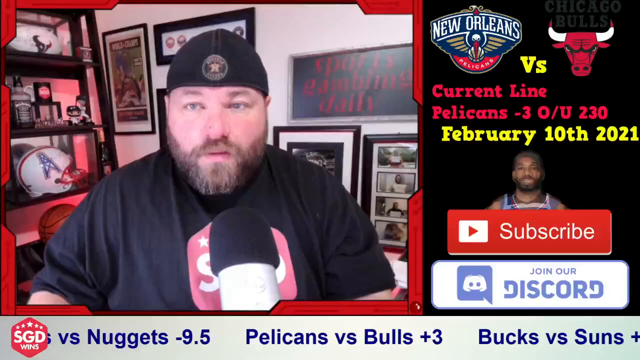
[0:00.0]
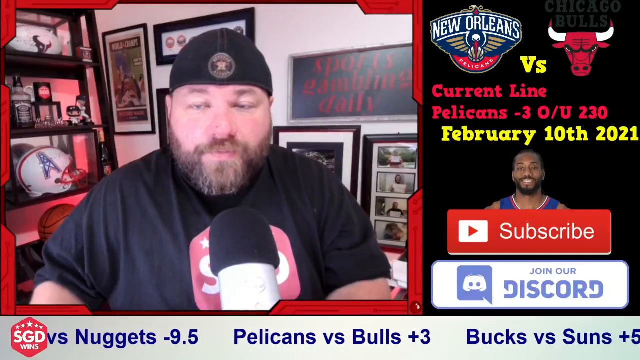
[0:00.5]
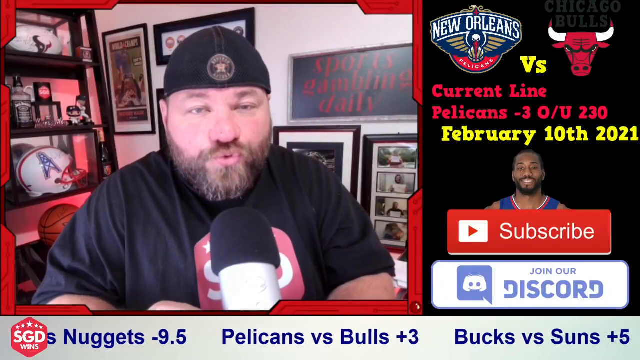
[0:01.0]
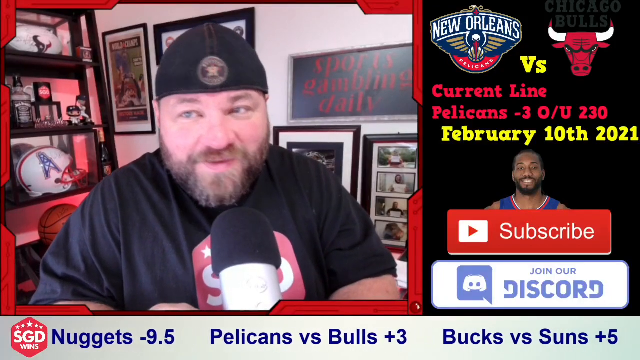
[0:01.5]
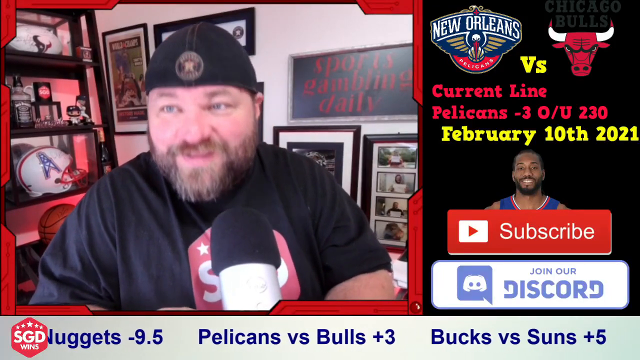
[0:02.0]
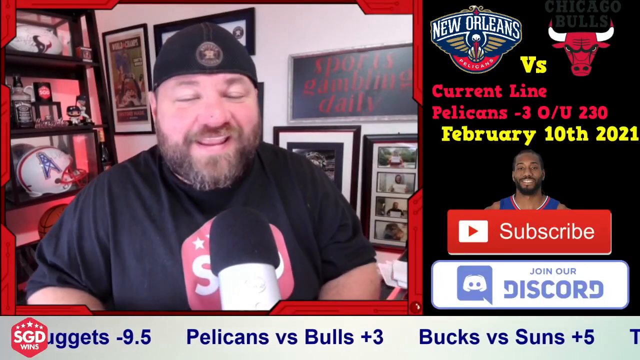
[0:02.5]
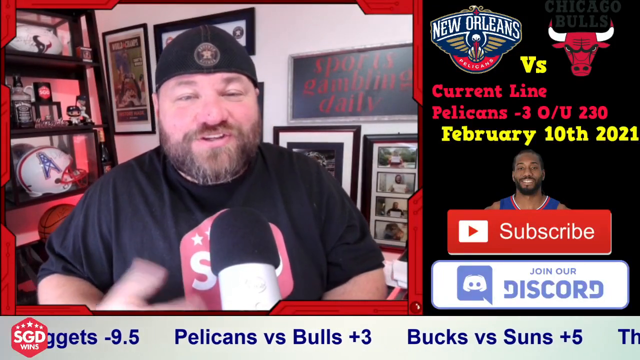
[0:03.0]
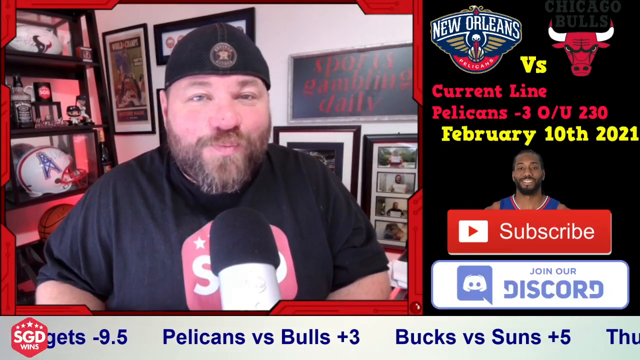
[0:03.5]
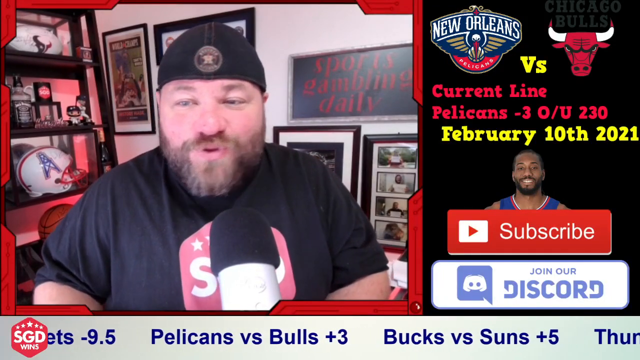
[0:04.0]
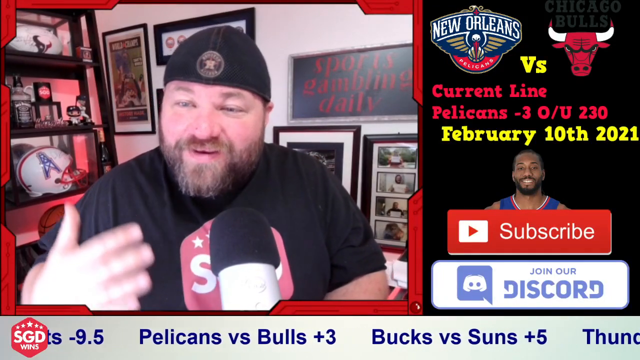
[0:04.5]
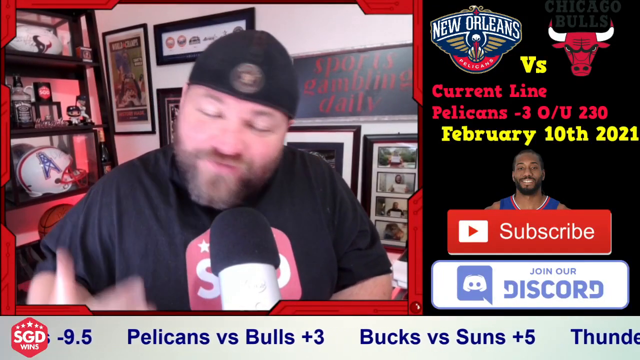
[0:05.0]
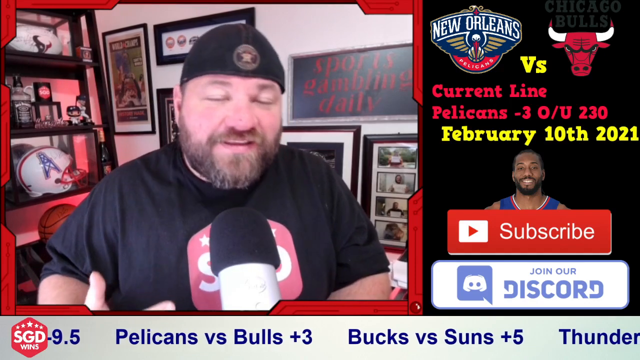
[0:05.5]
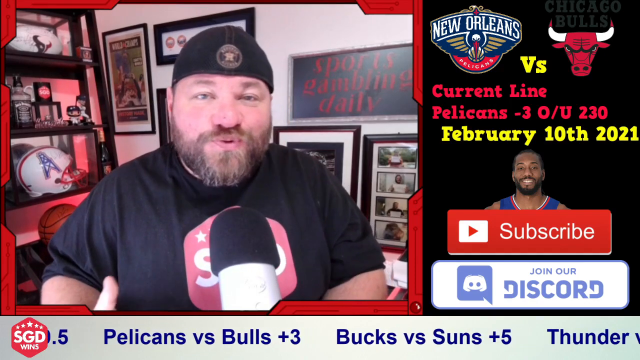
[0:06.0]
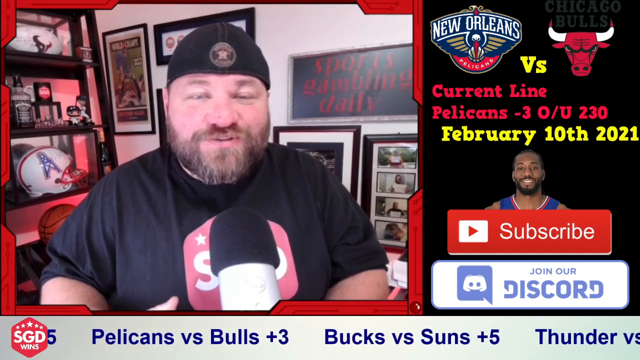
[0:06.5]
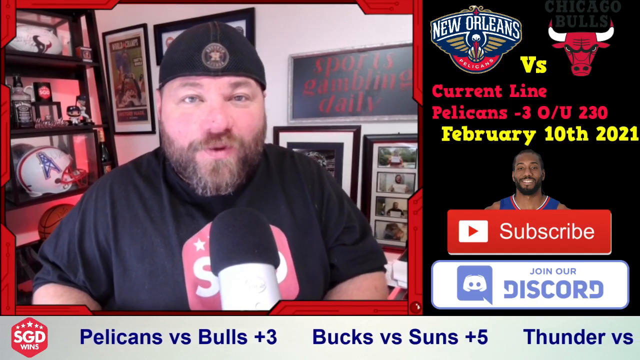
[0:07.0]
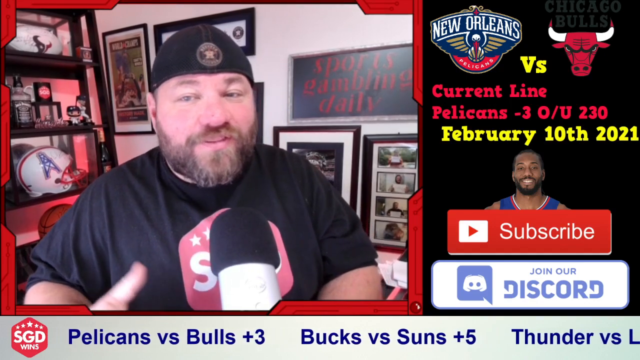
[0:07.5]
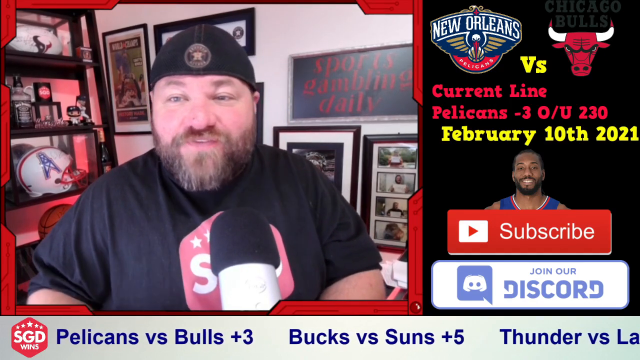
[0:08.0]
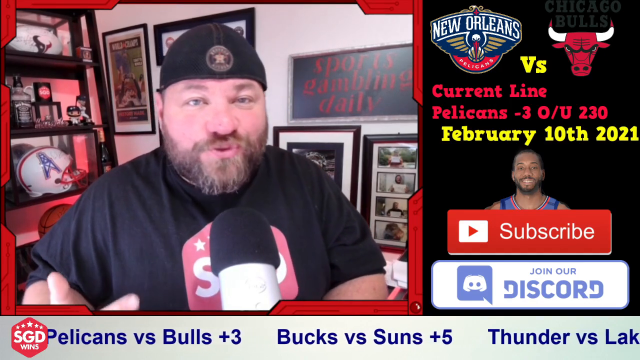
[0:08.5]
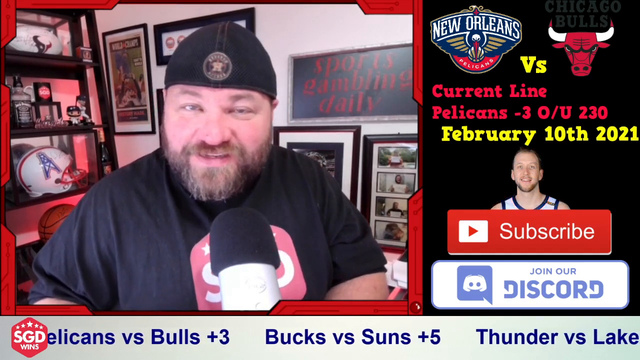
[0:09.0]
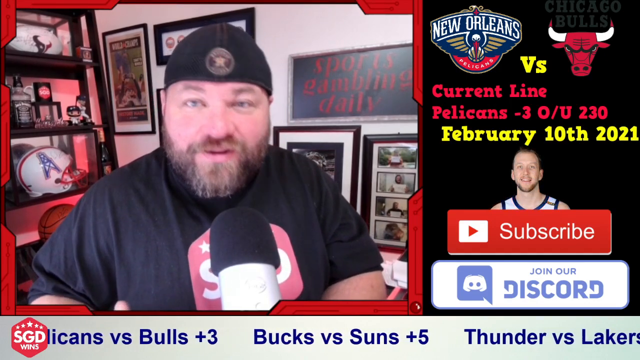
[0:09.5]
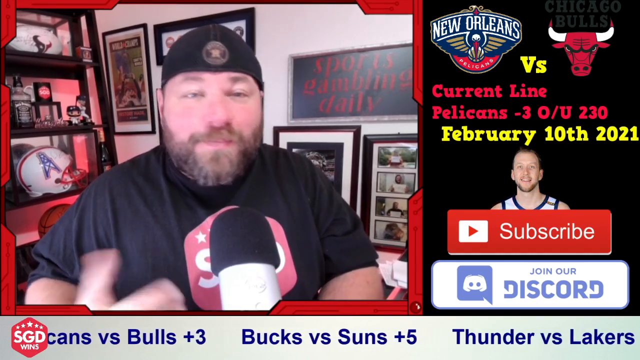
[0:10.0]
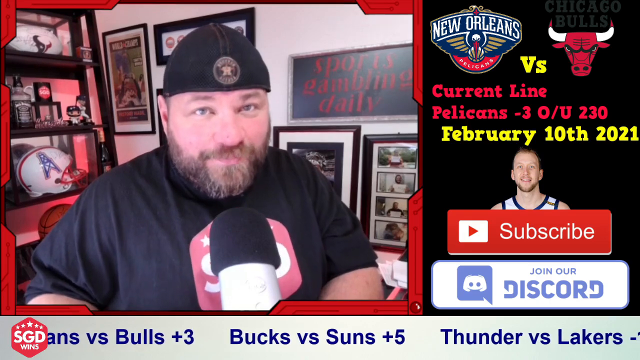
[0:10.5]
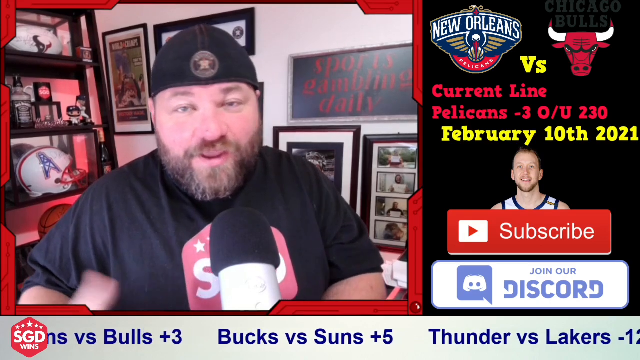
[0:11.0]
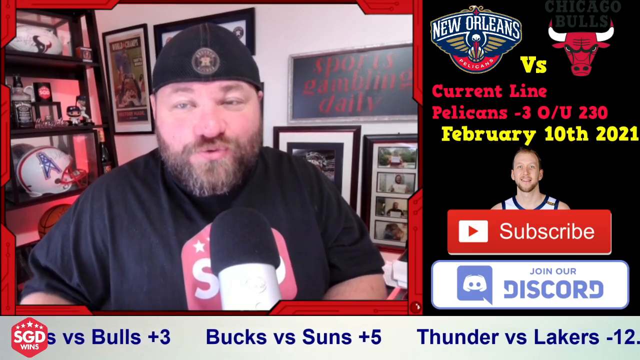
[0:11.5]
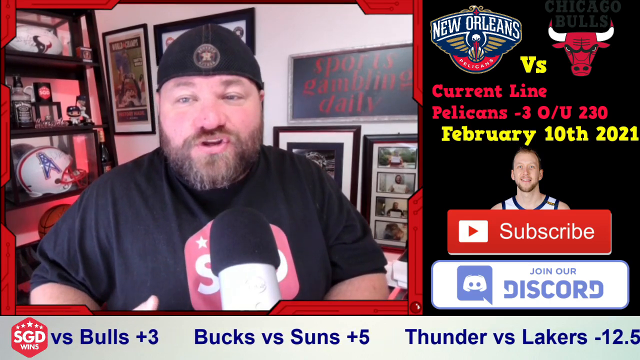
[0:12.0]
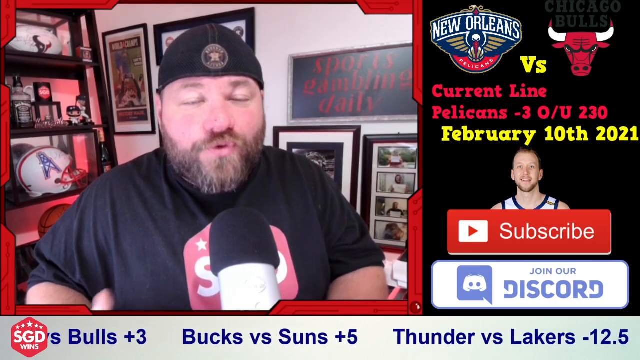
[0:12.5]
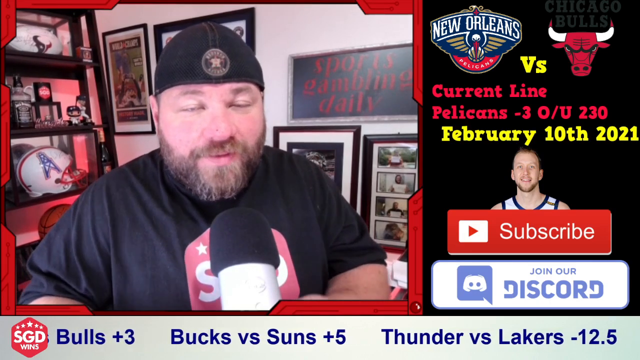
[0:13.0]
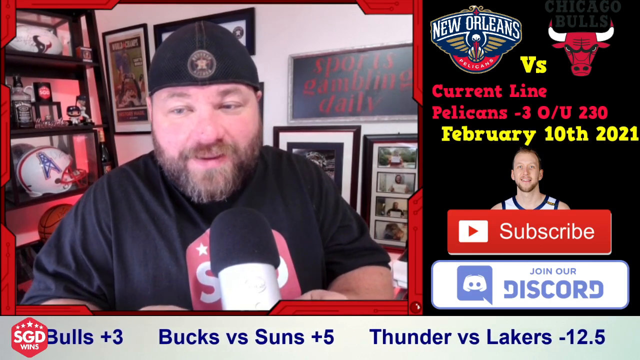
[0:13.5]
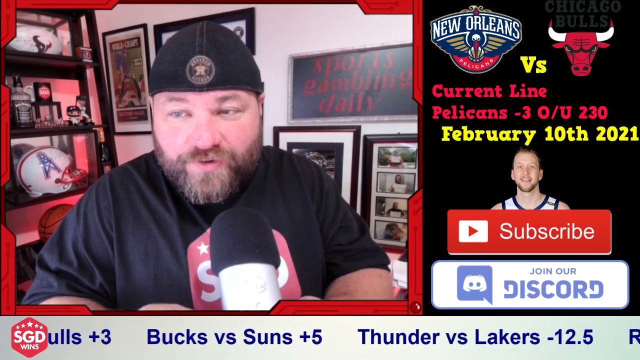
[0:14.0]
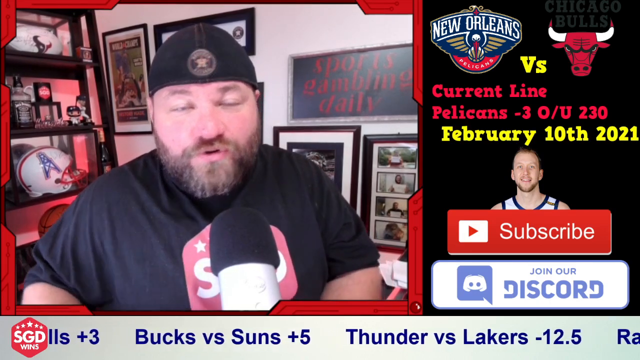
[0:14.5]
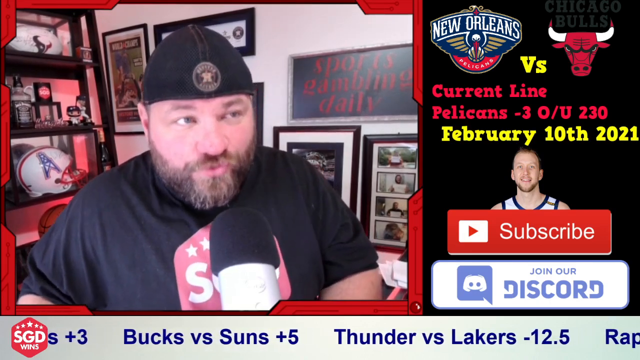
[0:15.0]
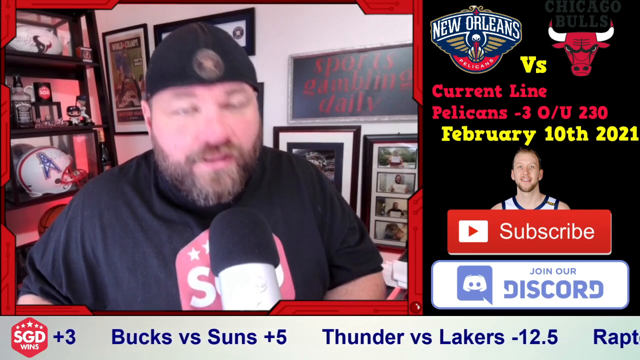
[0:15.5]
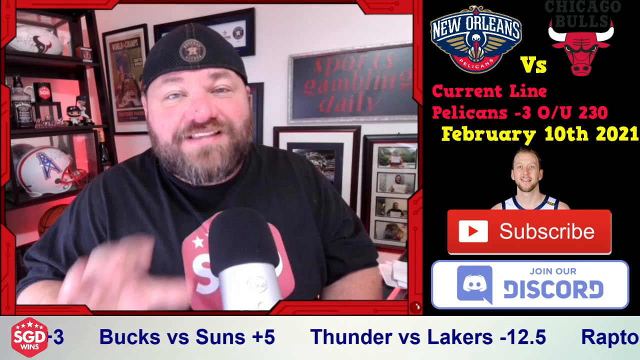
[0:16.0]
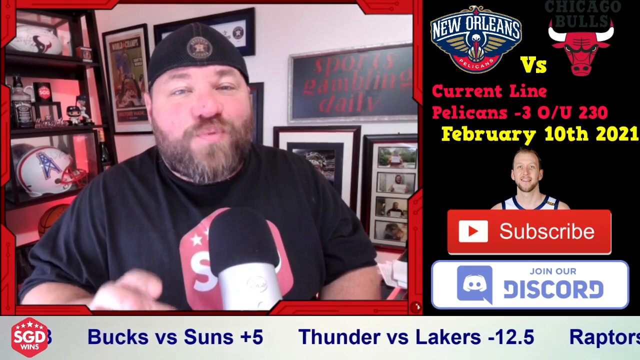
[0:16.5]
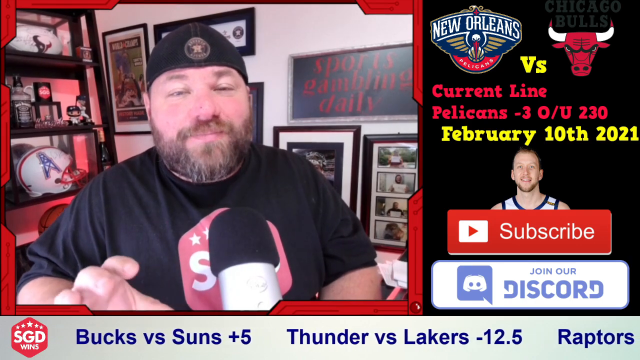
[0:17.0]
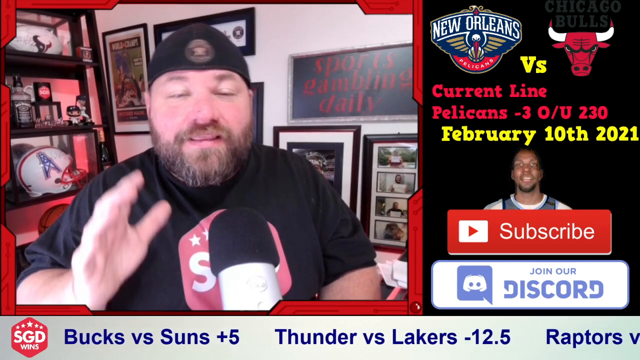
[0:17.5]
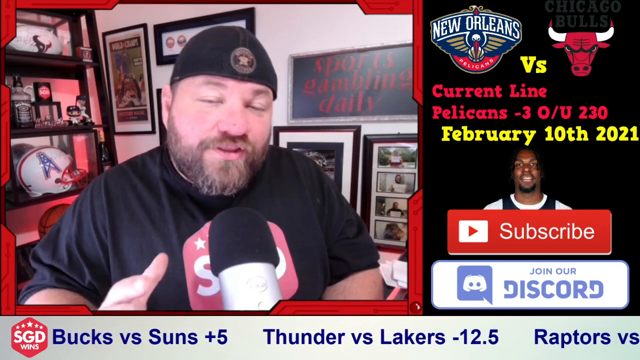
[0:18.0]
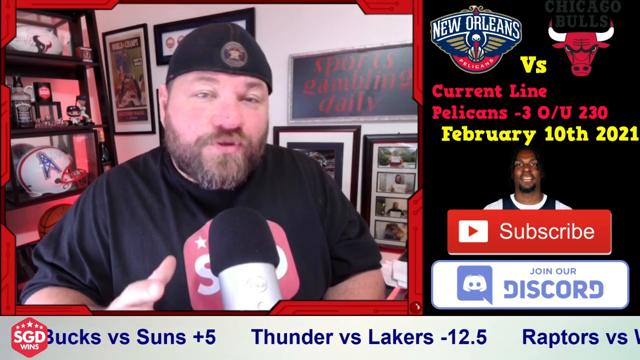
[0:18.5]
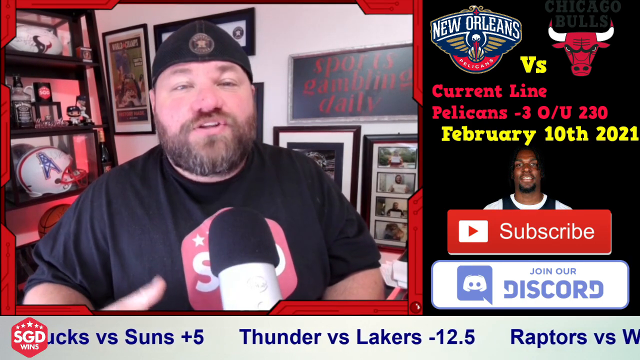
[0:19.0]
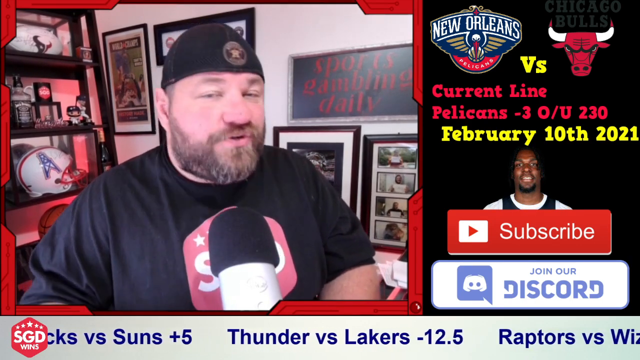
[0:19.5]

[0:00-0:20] The screen is split. On the left, a player talks into a large microphone in front of him. In the background there is what looks like a Houston Oilers football helmet, as well as a Texans football helmet. The man wears a backwards baseball cap, has a beard and facial hair, and is Caucasian; he wears a black short-sleeved t-shirt with a red print on the front. On the right side of the split screen there is an emblem and text reading "New Orleans Pelicans versus" with a picture of the Chicago Bulls bull. Below it the text reads "current line pelicans -3" and "O/U 230", followed by "February 10th 2021". Beneath that is a picture of another man who could be an NBA basketball player, and under him the words "subscribe" and, below that, "join our discord".